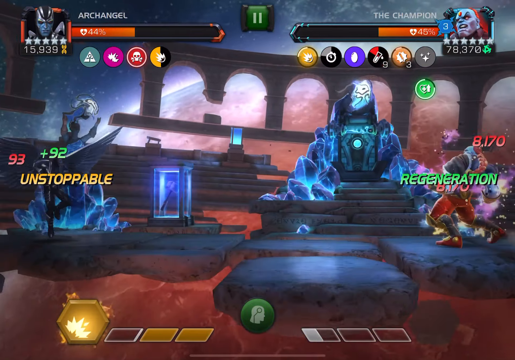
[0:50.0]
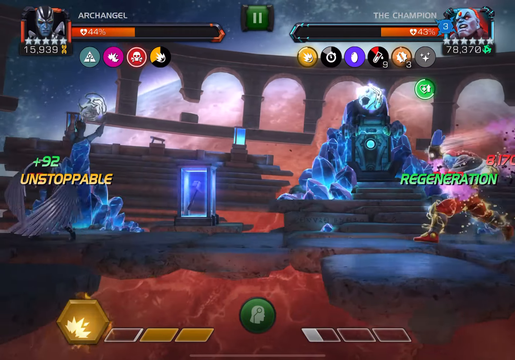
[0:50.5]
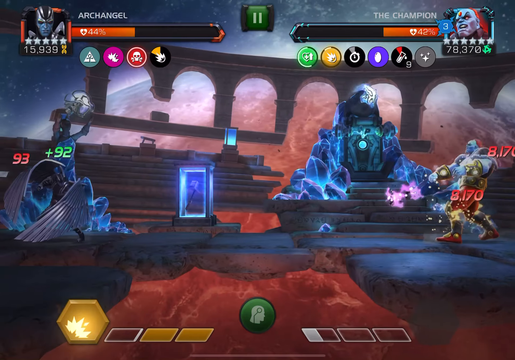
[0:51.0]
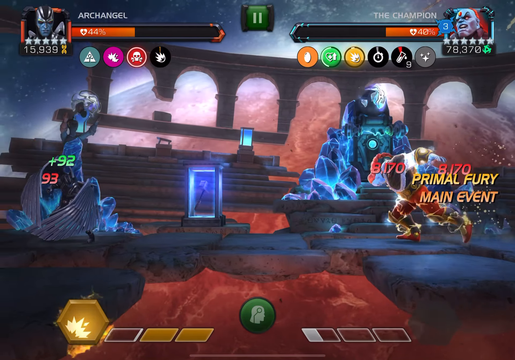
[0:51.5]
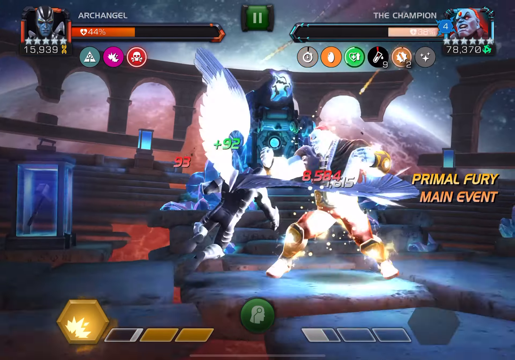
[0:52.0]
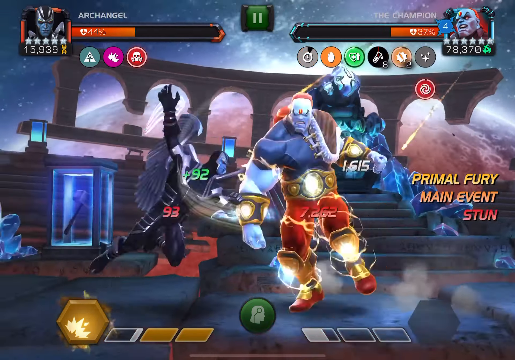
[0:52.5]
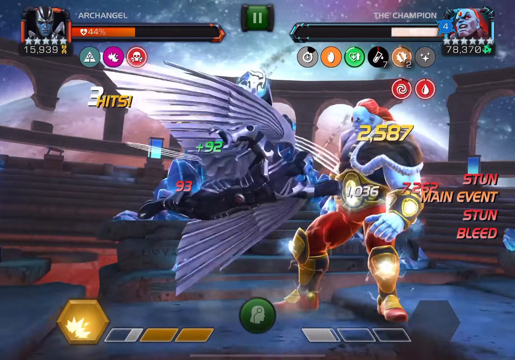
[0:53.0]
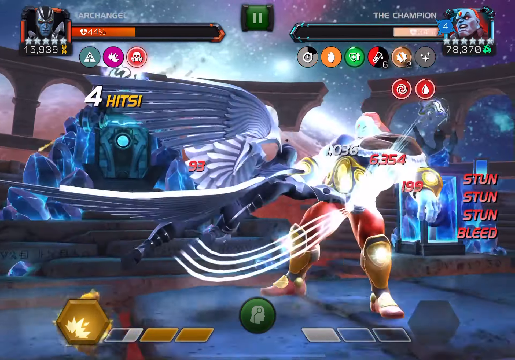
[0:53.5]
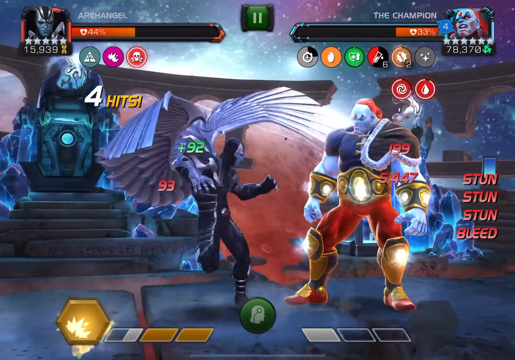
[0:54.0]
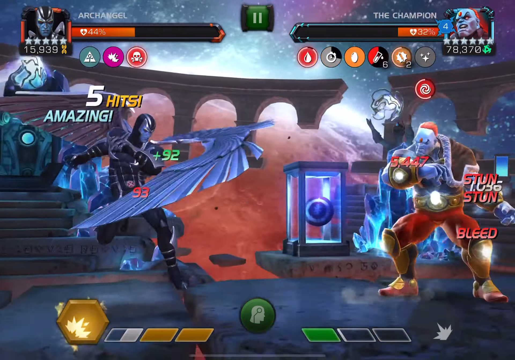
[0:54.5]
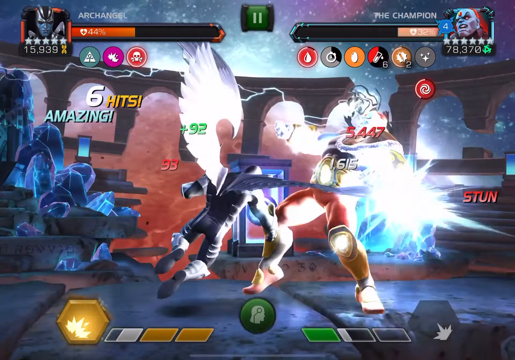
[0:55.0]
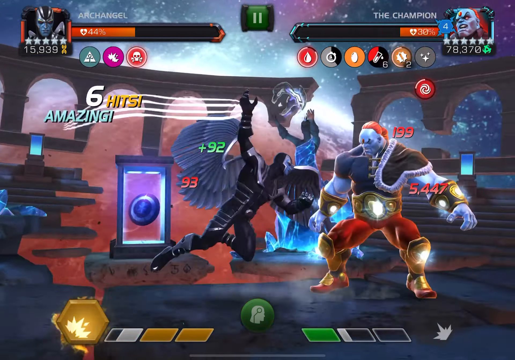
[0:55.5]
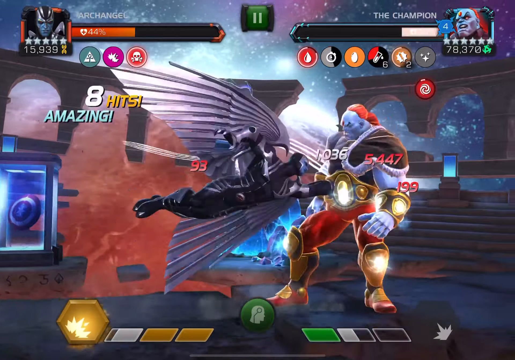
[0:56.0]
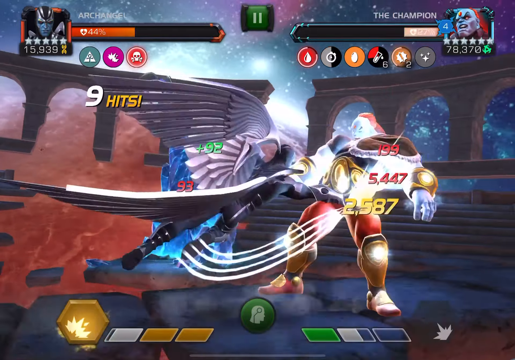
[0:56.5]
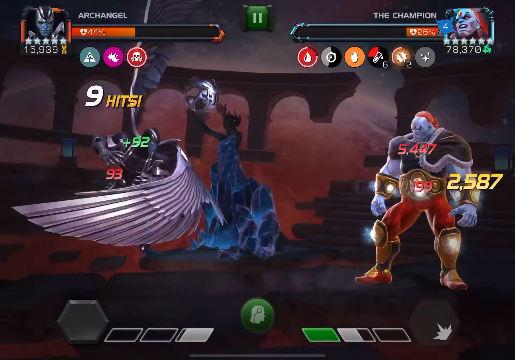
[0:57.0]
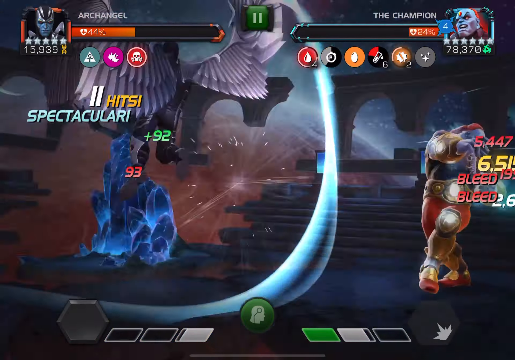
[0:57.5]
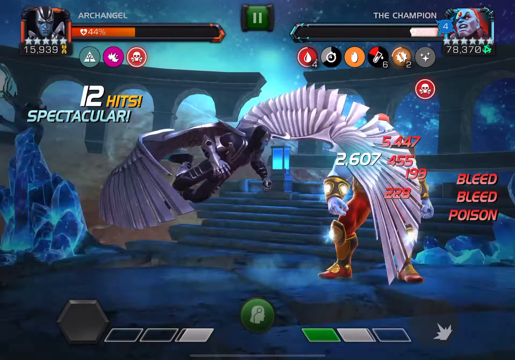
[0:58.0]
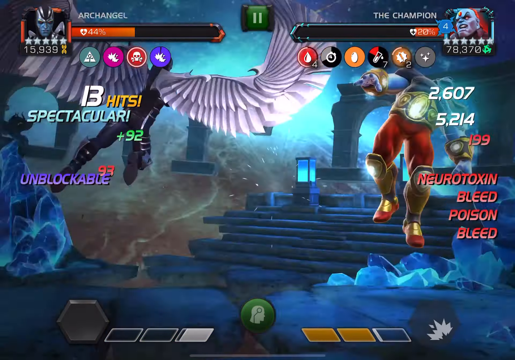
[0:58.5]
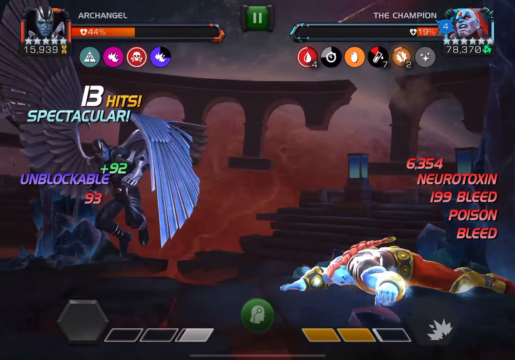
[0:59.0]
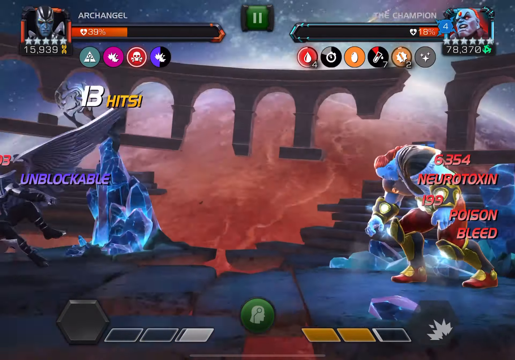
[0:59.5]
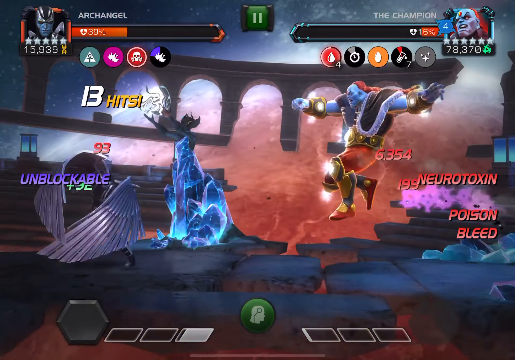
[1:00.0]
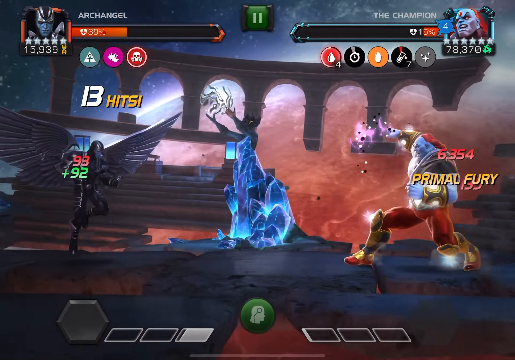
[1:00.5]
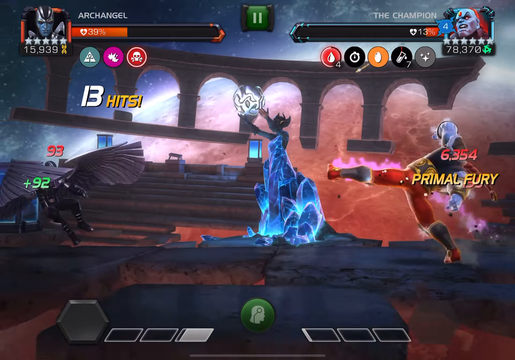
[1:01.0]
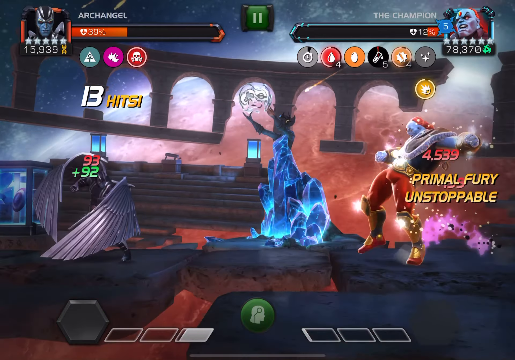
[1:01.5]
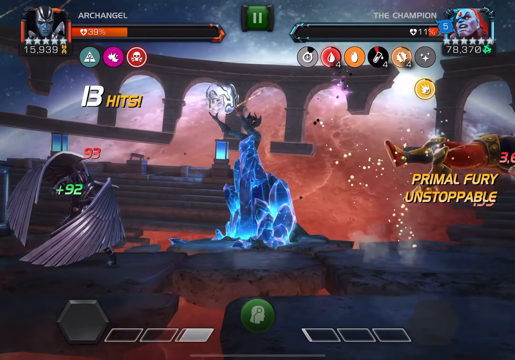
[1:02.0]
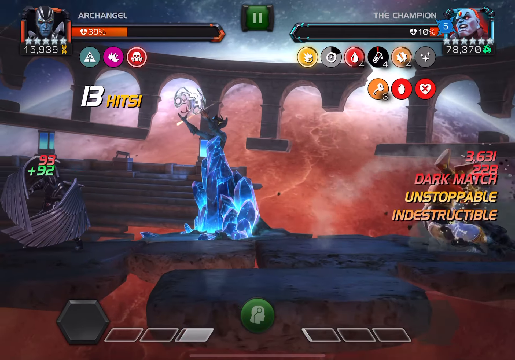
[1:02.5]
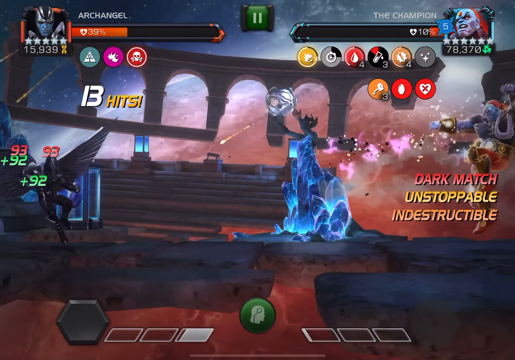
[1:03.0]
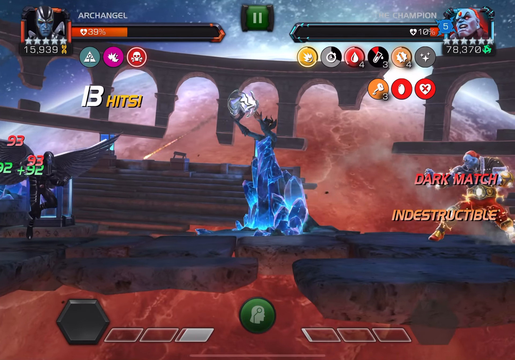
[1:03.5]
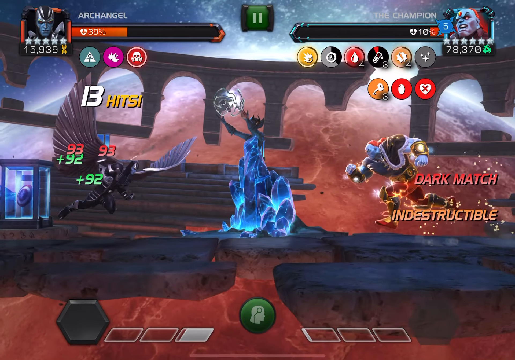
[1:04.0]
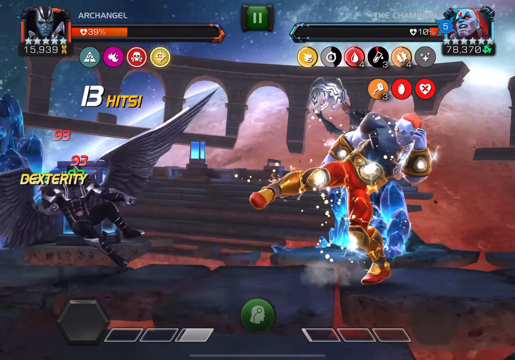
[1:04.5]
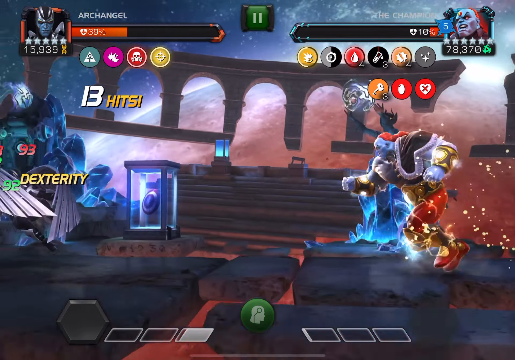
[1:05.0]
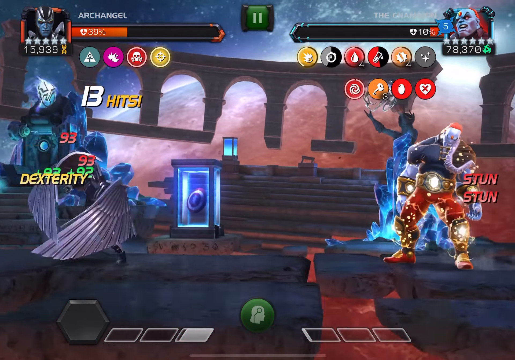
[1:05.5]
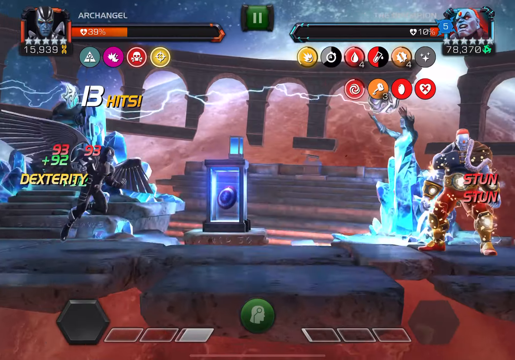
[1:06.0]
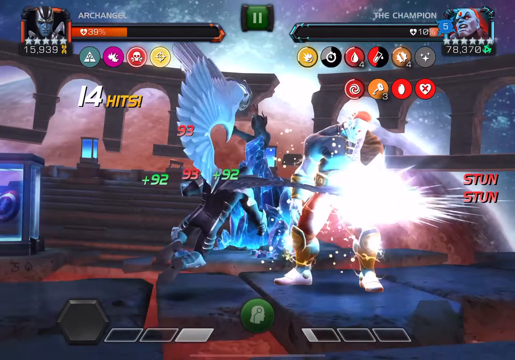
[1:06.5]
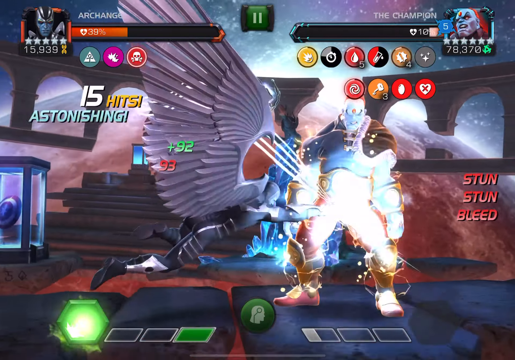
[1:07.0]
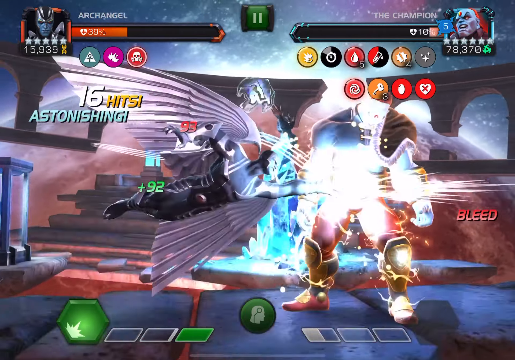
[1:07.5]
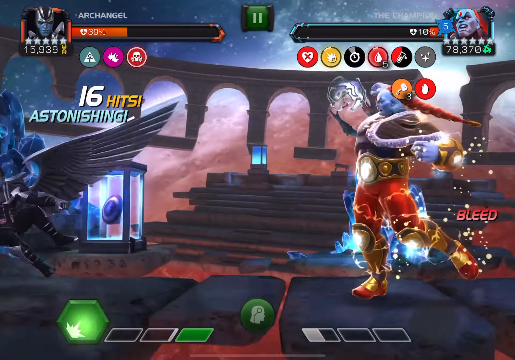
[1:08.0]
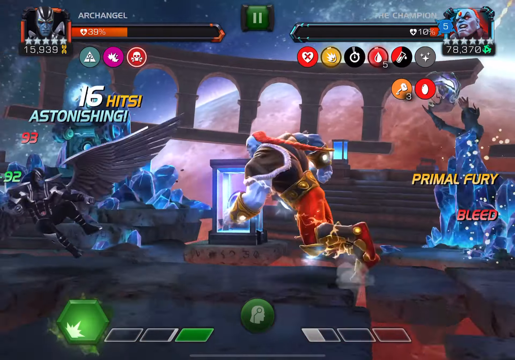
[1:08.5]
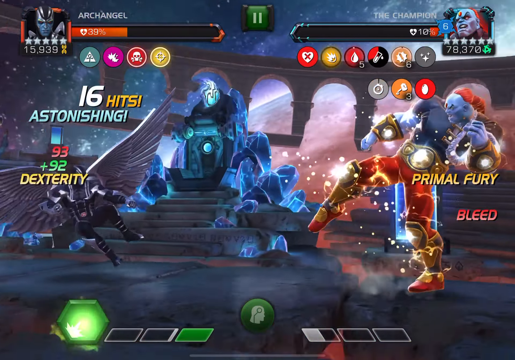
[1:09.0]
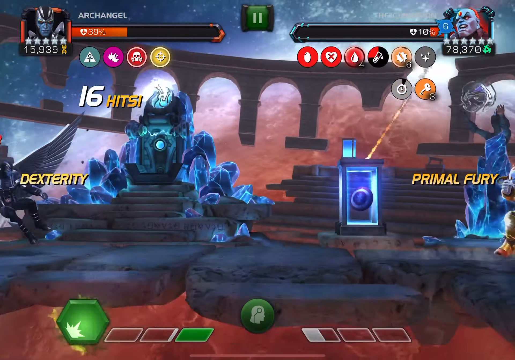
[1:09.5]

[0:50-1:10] Archangel's health is 44 while the Champion's is 40, putting Archangel in the lead, with the health bars at the top left and right. Archangel looks like a black angel with black wings; the Champion is a large blue man with orange hair, an orange gem, gold boots, a gold belt and a gold bracelet. They both charge each other, and Archangel's combo counter climbs through 7-hit, 9-hit, 10-hit, 11-hit and 12-hit "Spectacular". Archangel then backs away, leaving the Champion sort of hitting air. The Champion is then on 10 health while Archangel is on 39. Archangel charges forward and hits the stunned Champion, but it does not appear to do any damage past 10%. Different statuses pop up on the right and left as they land hits.